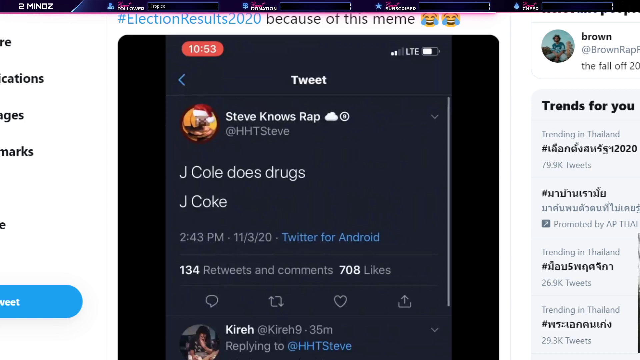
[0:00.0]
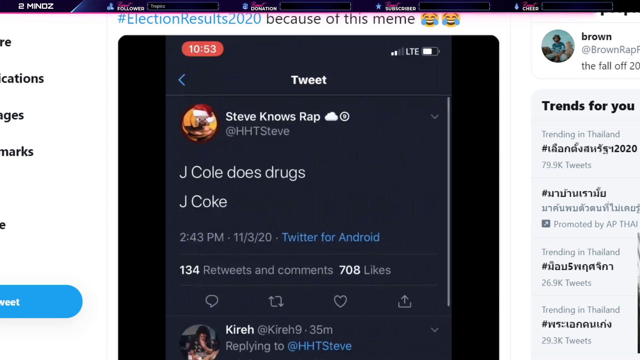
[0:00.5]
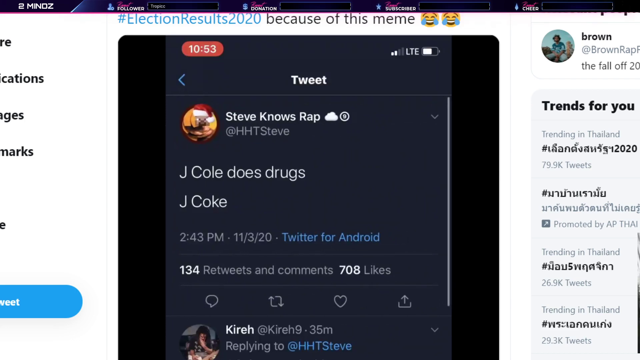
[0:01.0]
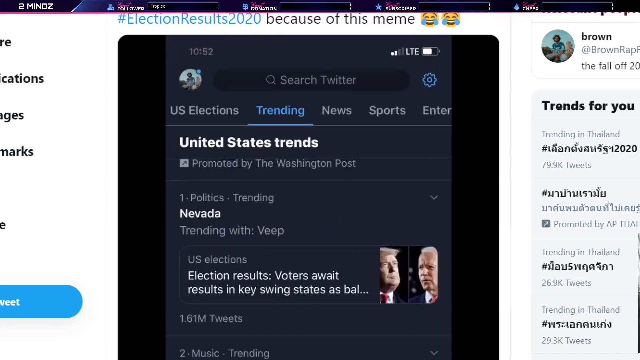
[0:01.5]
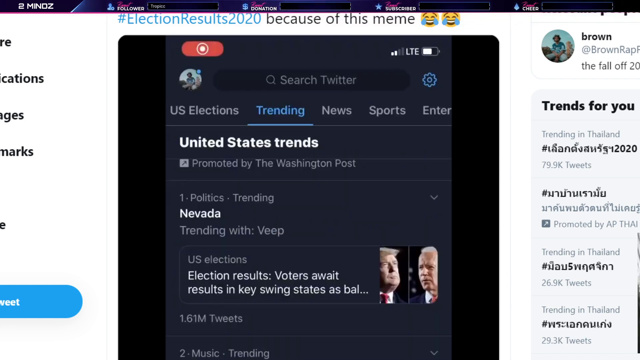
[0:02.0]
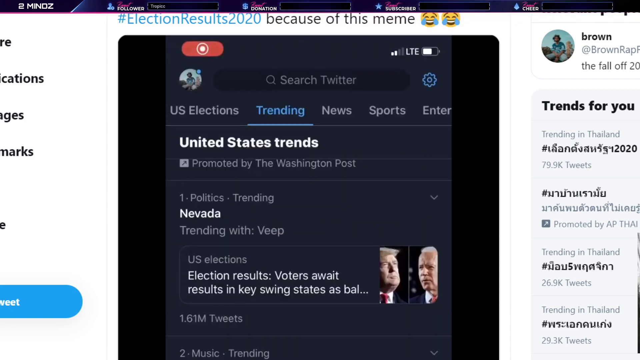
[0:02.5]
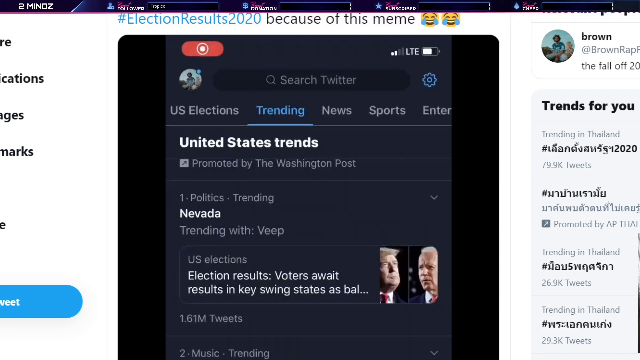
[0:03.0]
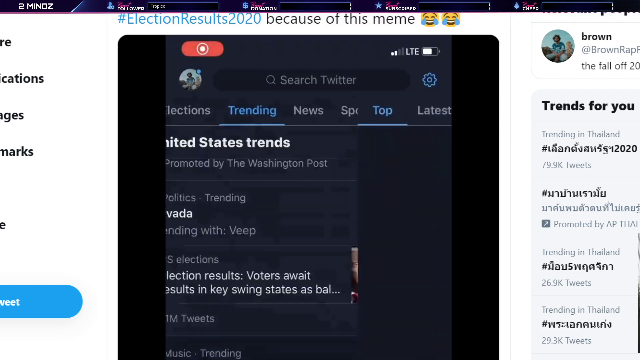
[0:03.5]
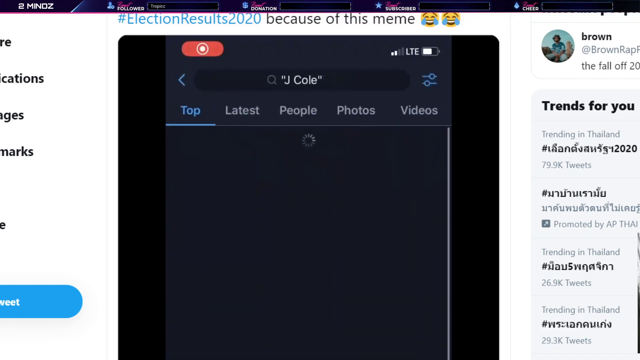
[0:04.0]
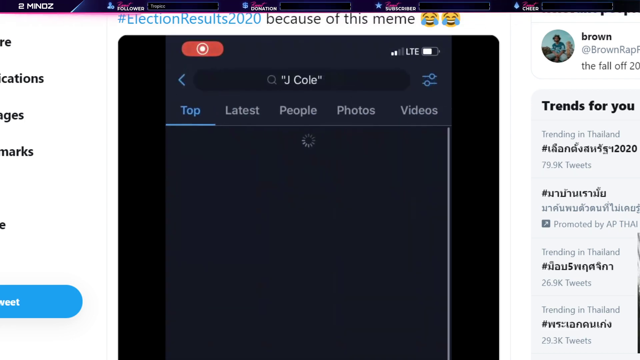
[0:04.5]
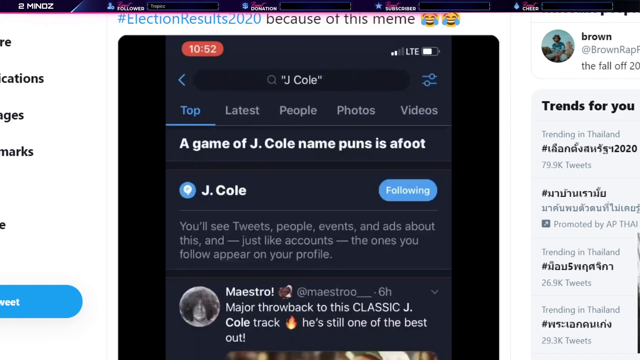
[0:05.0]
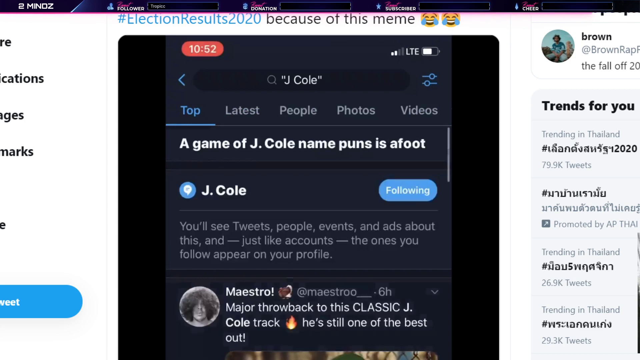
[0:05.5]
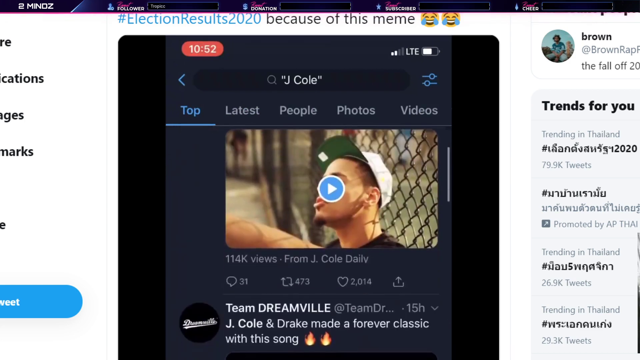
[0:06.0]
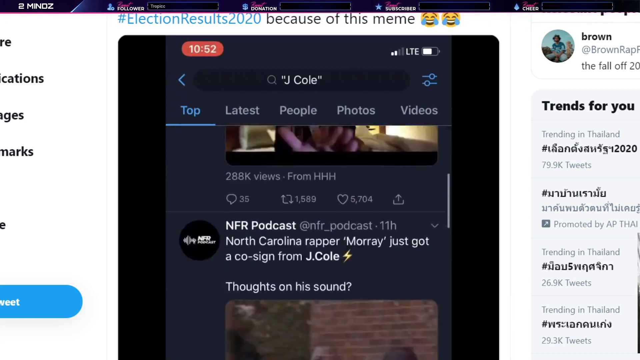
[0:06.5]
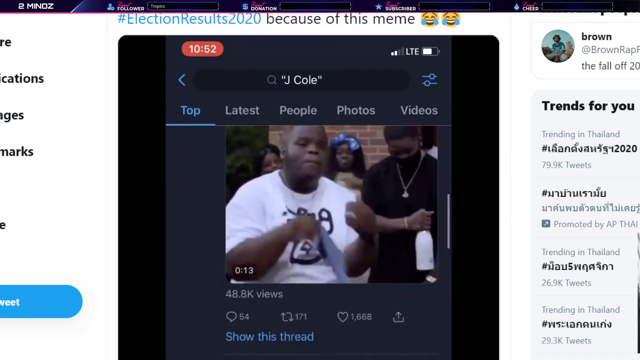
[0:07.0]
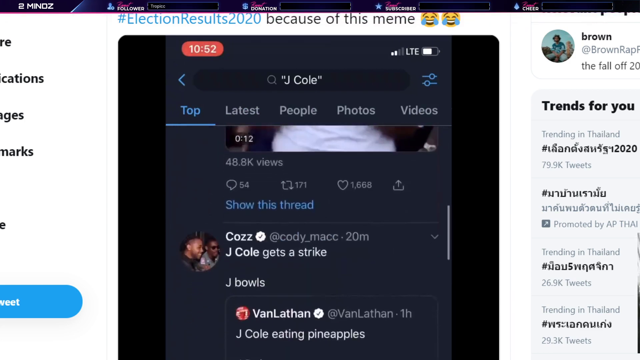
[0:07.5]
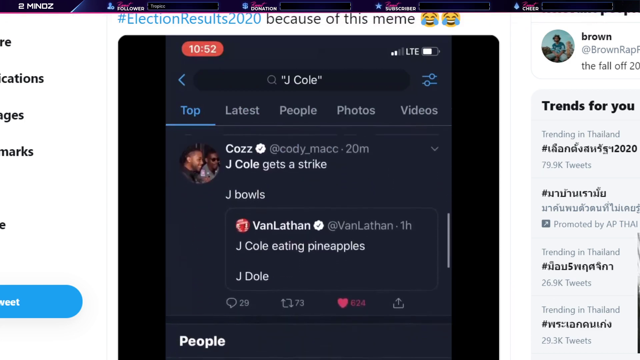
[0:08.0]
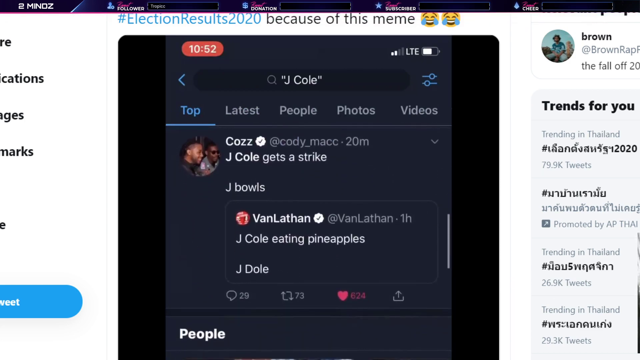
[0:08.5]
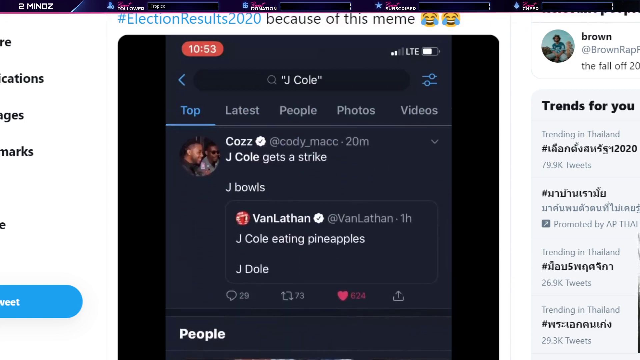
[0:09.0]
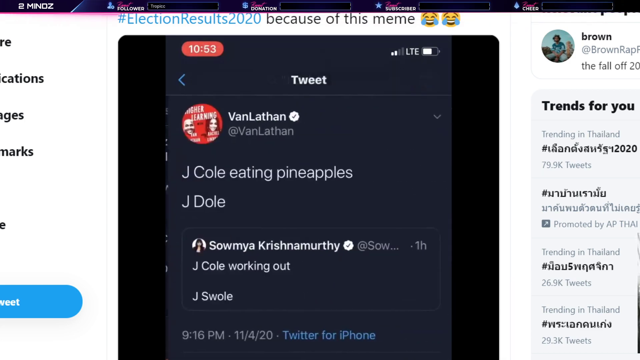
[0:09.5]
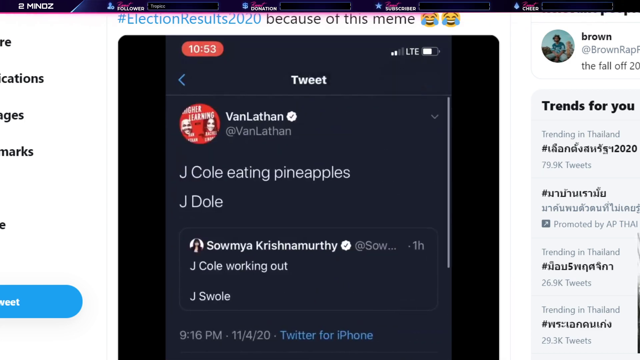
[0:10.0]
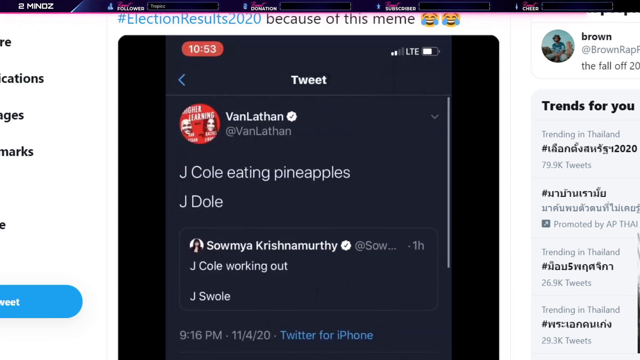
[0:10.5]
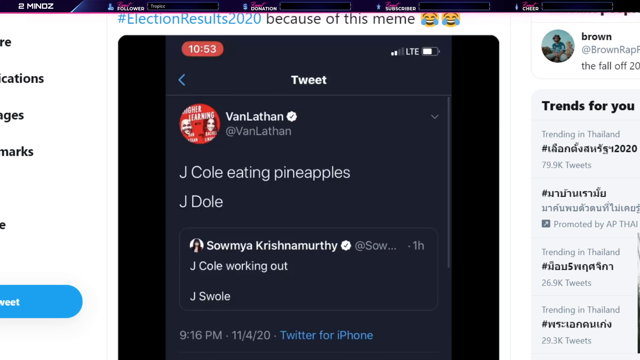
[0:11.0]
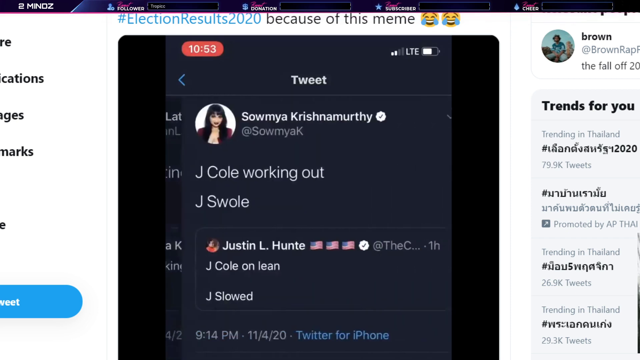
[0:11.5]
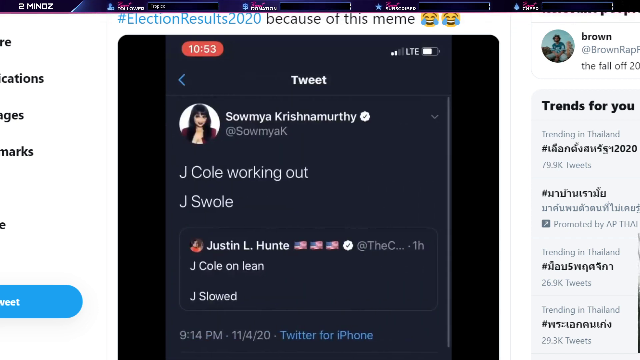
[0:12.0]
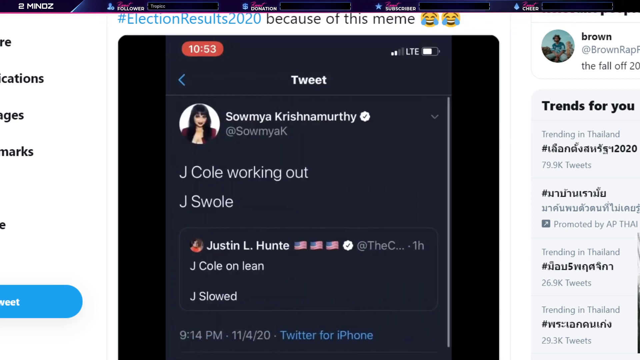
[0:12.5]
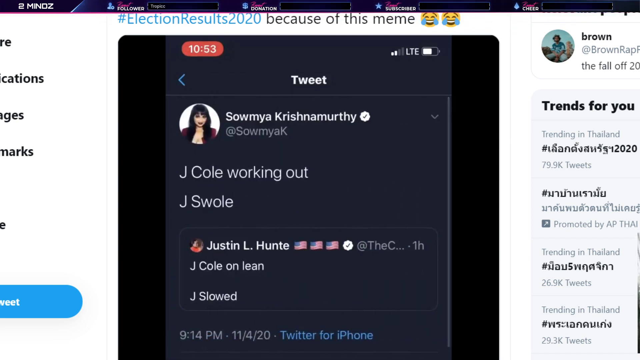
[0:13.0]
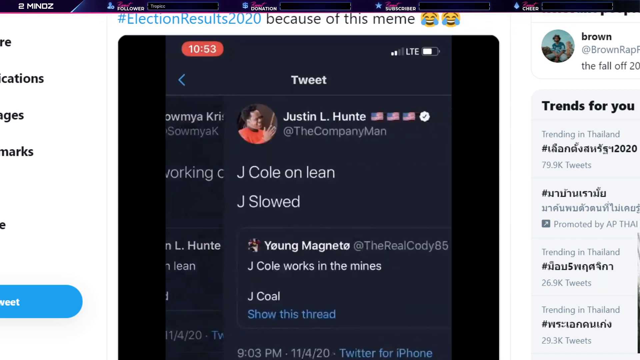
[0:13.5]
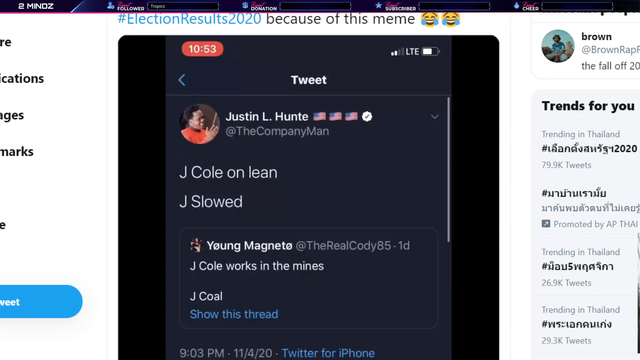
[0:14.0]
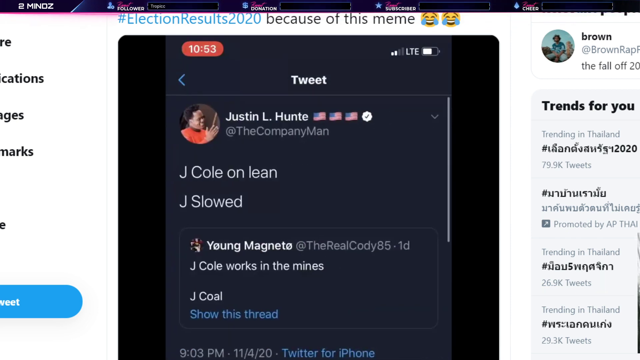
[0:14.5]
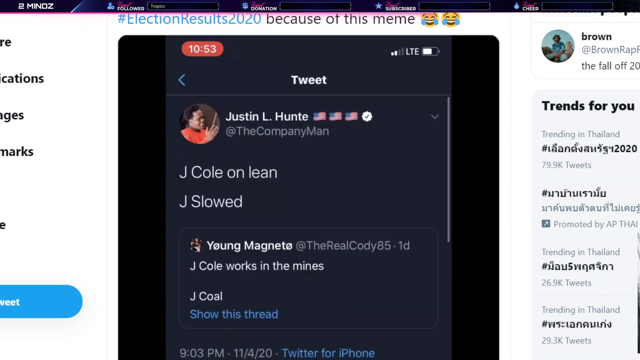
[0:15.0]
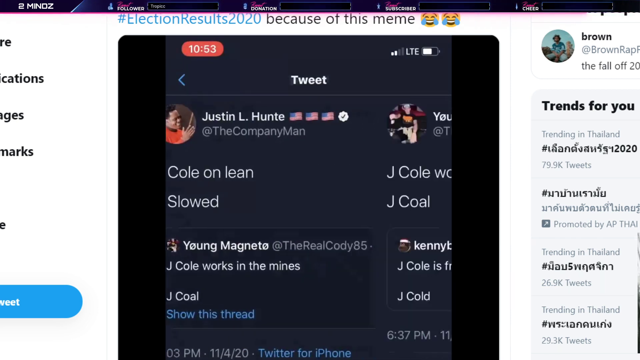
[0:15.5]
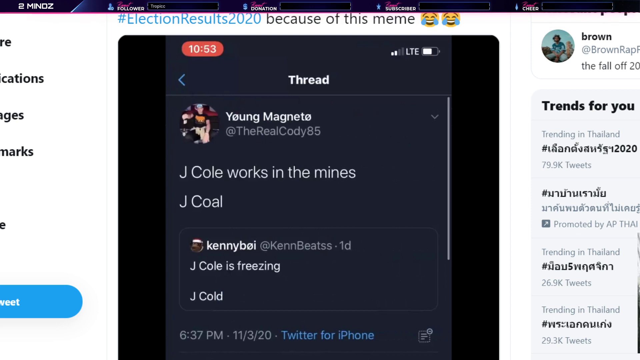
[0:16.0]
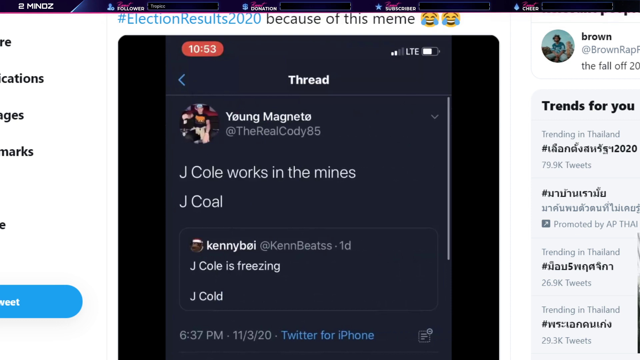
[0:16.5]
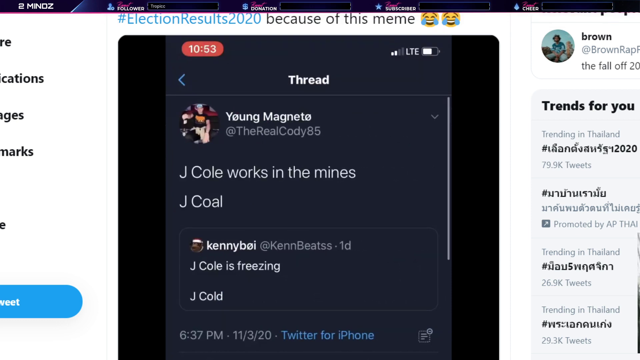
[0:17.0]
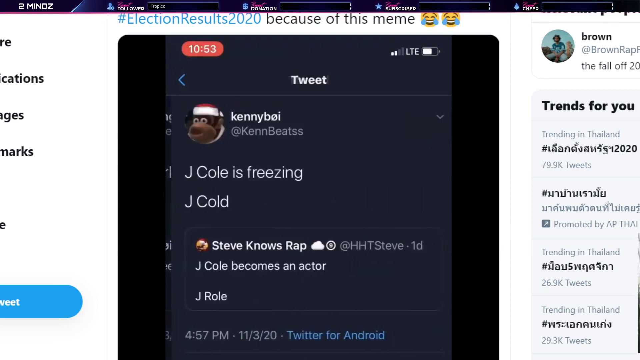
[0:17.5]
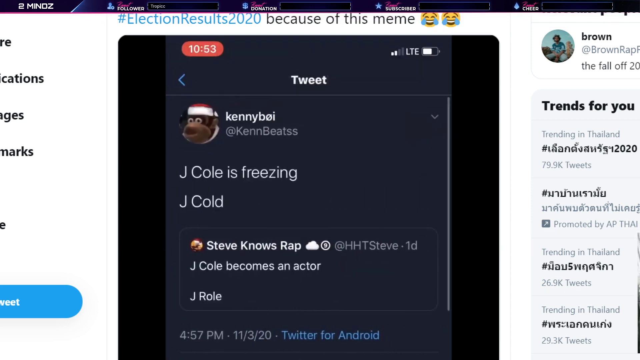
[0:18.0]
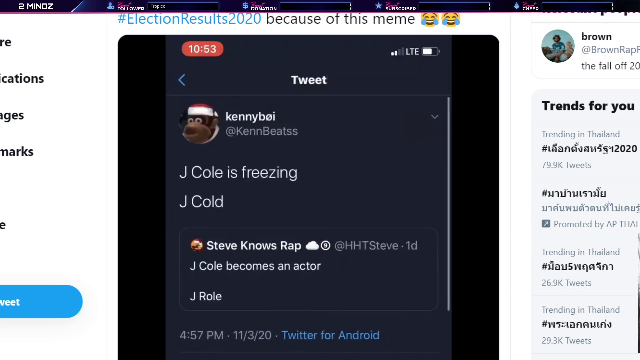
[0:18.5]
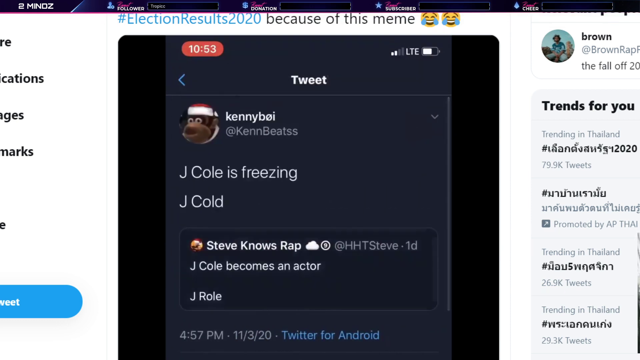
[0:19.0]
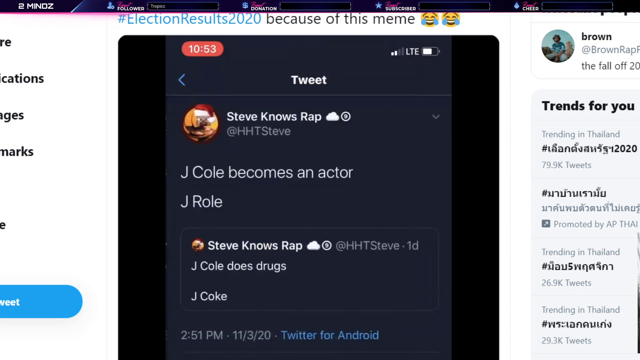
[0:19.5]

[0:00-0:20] At the top is the hashtag "#electionresults202" with two laughing faces. Below the text is an icon that looks like a video camera. There is a Twitter search bar with a settings bar next to it. It appears to be an on-screen video of a mobile phone. Twitter shows different columns named U.S. elections, trending, news, sports, and entertainment; trending is selected and shown in blue. J. Cole is searched in the search bar, and a J. Cole game is shown. The person scrolls down and clicks on a tweet by Cozz posted 20 minutes ago. People appear to be tweeting memes about J. Cole.